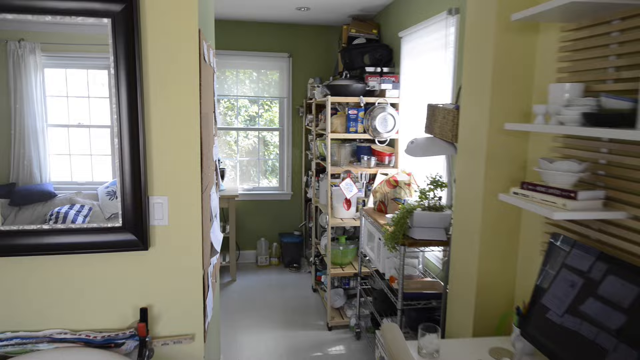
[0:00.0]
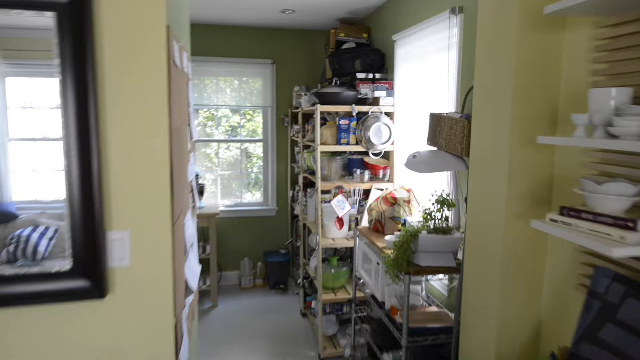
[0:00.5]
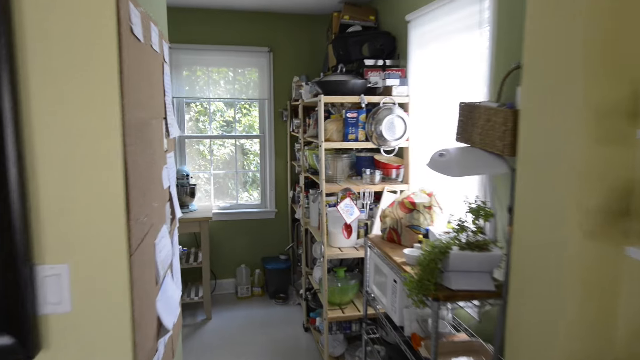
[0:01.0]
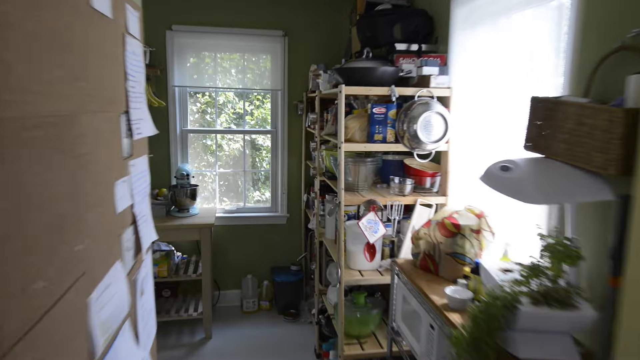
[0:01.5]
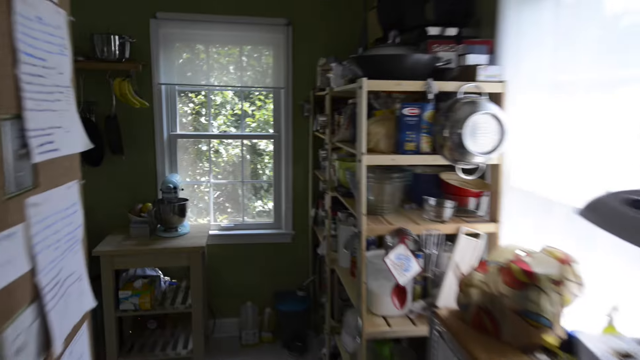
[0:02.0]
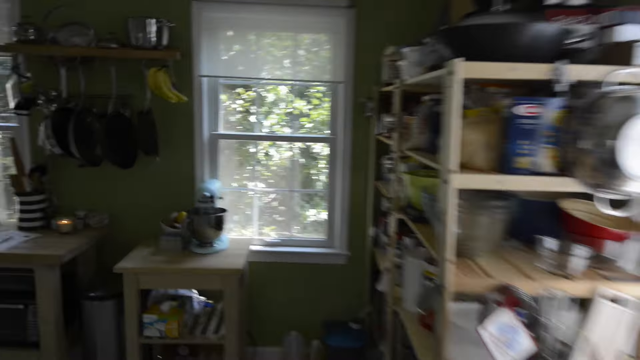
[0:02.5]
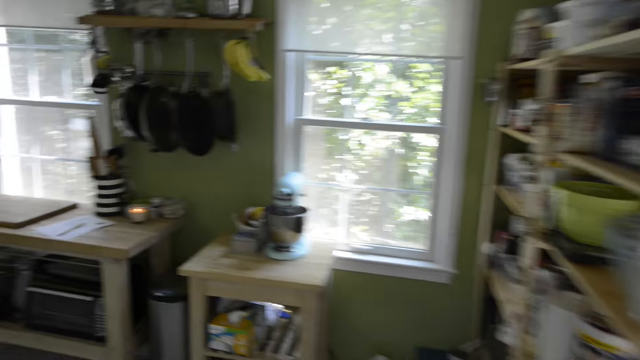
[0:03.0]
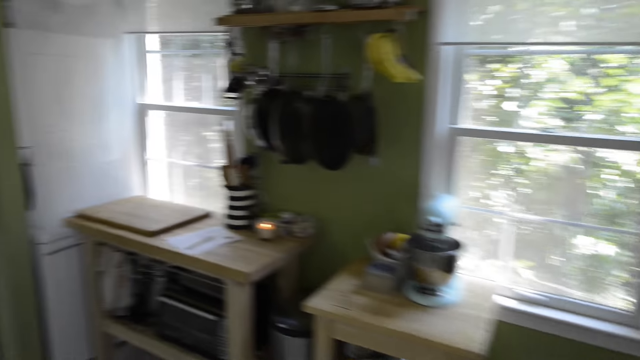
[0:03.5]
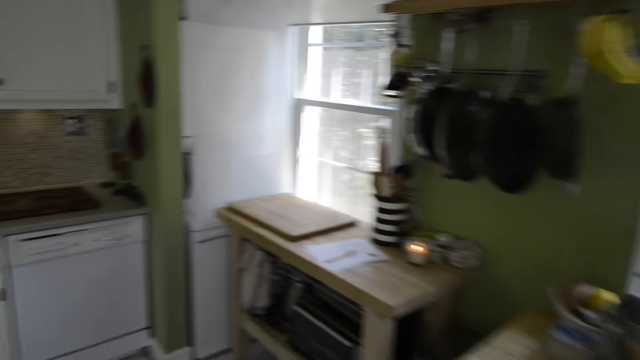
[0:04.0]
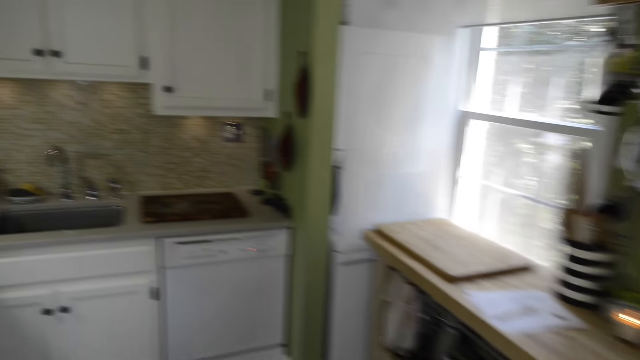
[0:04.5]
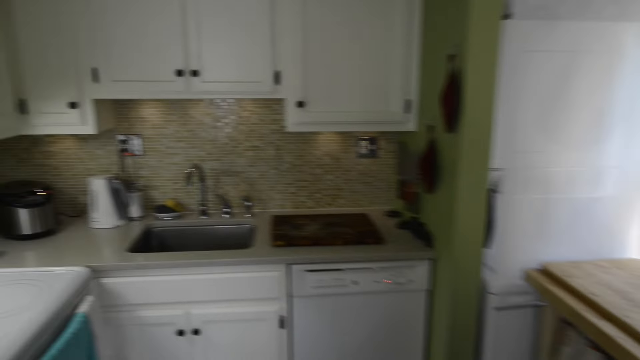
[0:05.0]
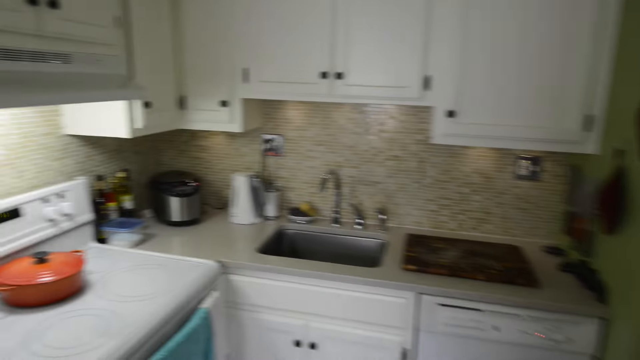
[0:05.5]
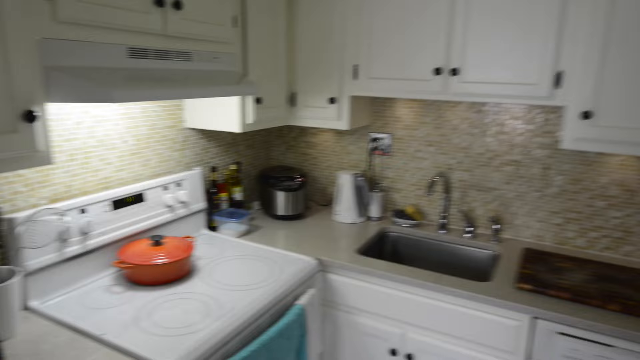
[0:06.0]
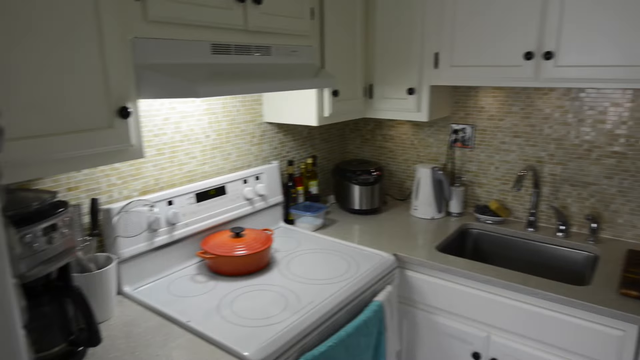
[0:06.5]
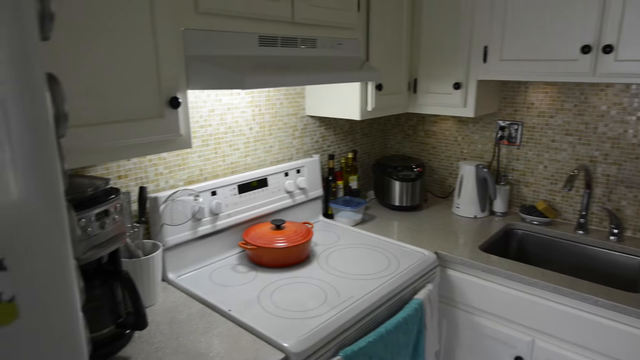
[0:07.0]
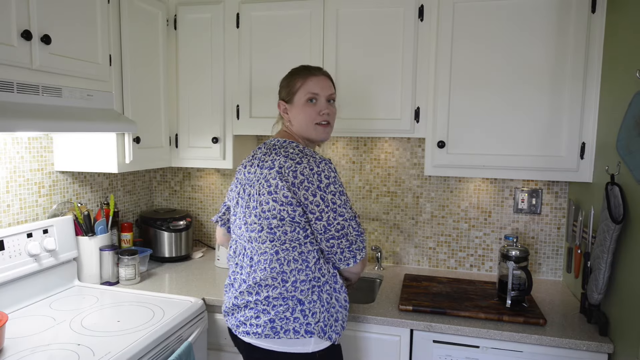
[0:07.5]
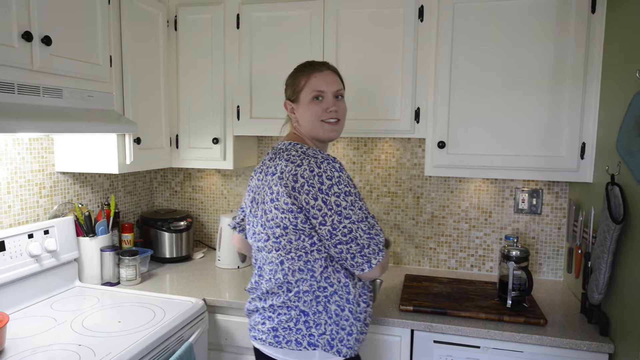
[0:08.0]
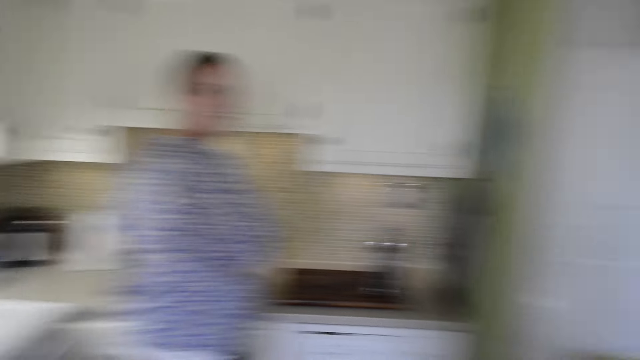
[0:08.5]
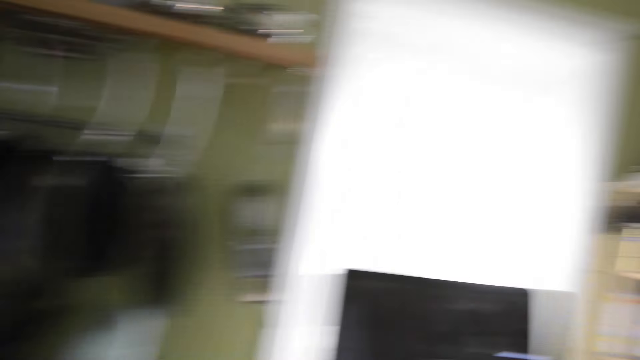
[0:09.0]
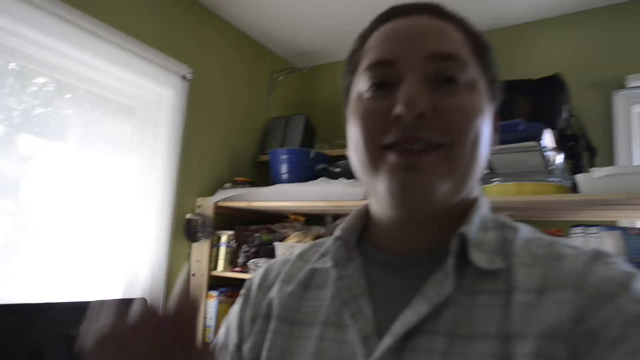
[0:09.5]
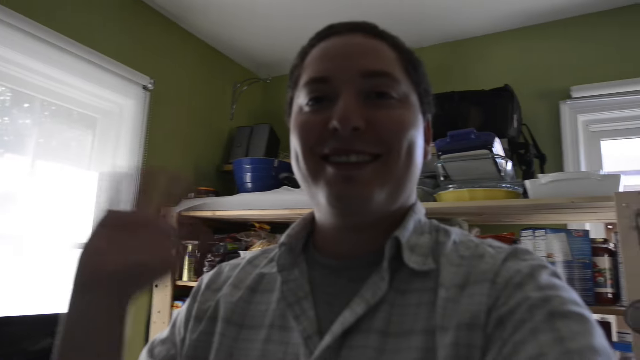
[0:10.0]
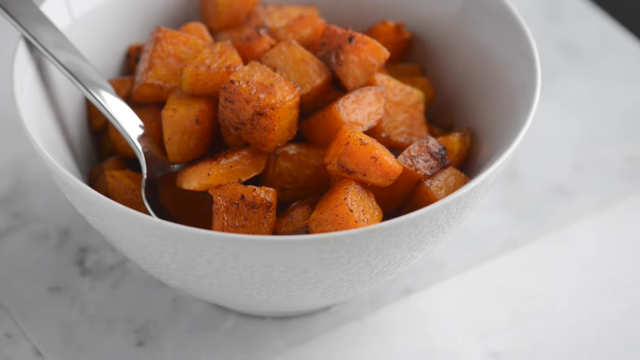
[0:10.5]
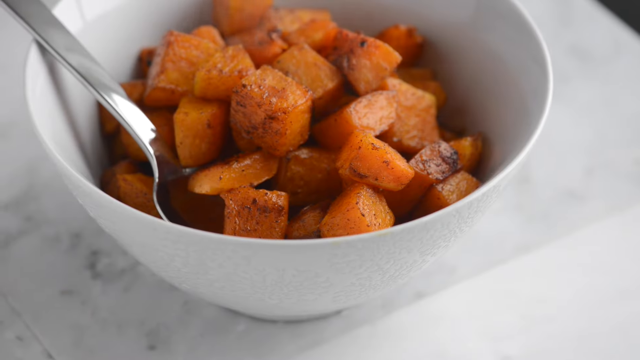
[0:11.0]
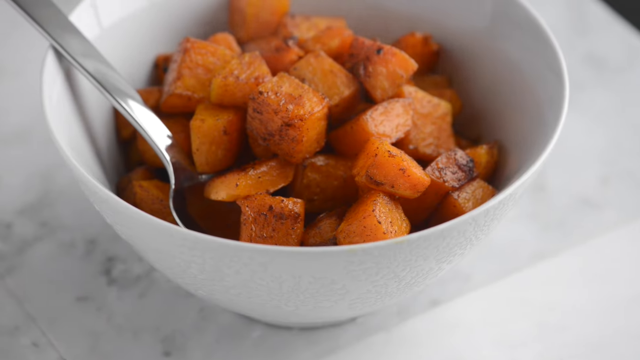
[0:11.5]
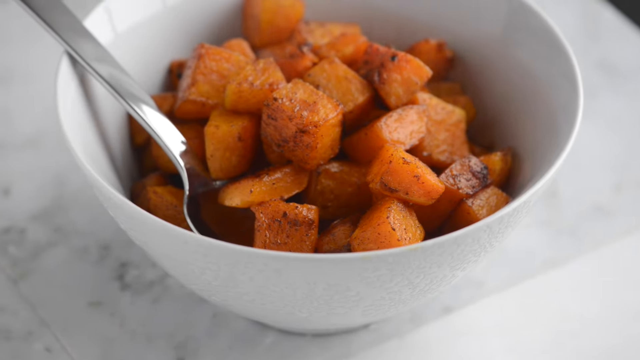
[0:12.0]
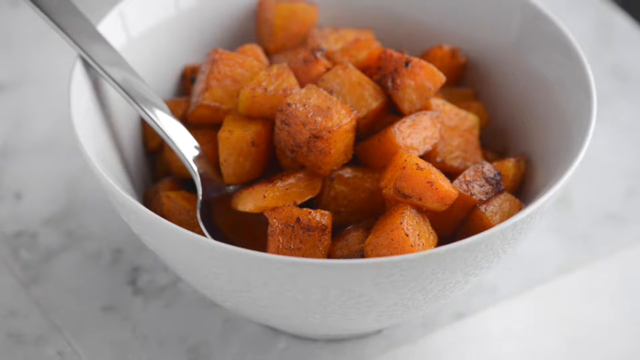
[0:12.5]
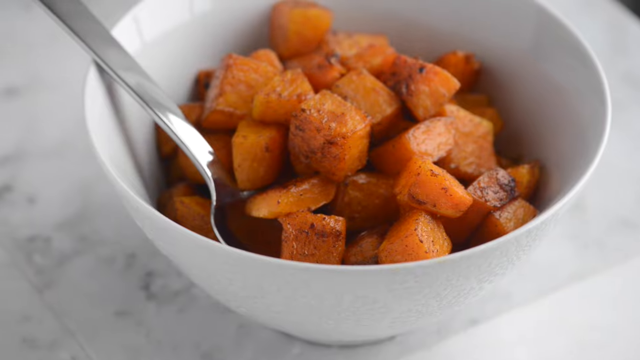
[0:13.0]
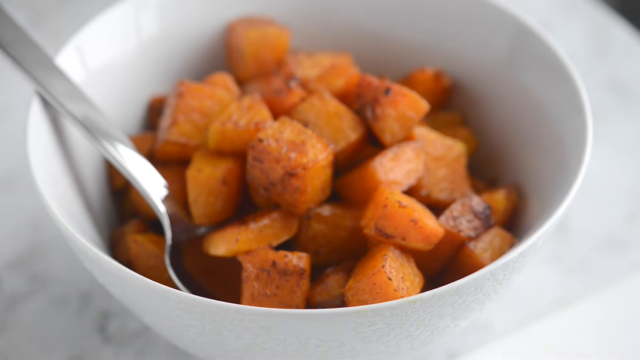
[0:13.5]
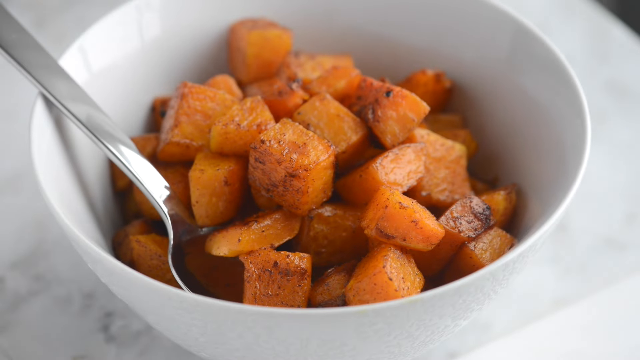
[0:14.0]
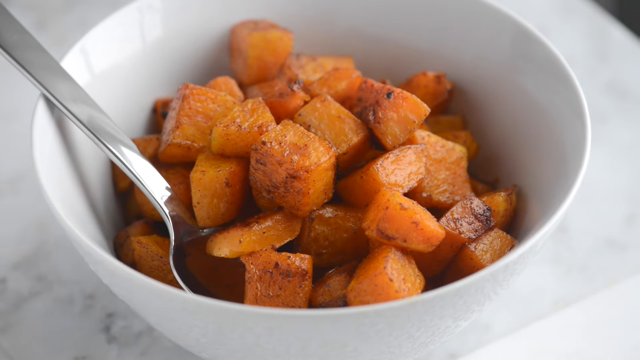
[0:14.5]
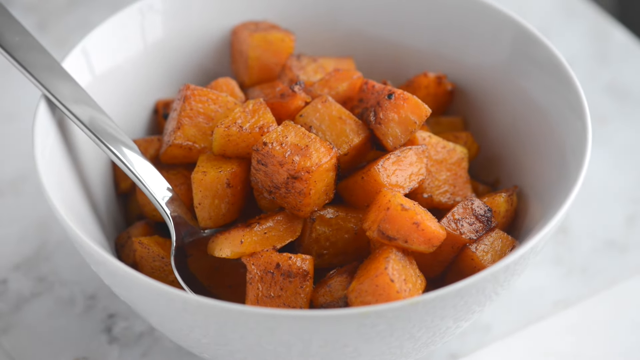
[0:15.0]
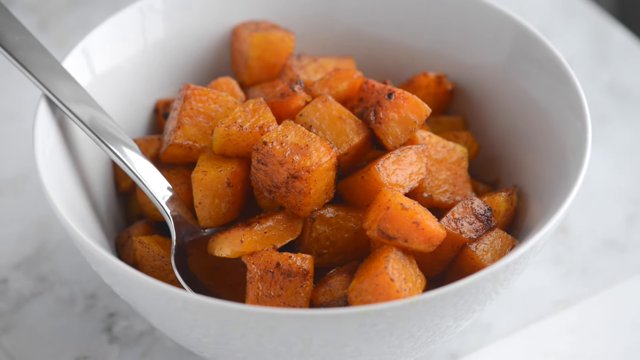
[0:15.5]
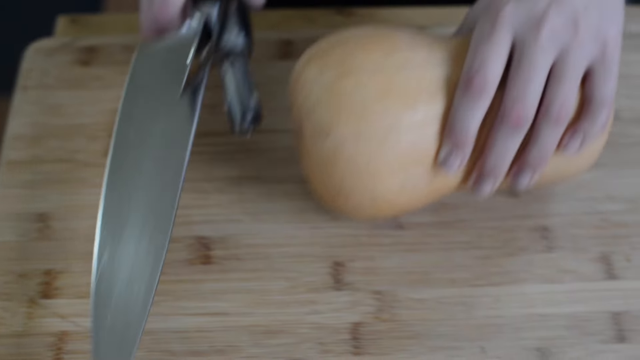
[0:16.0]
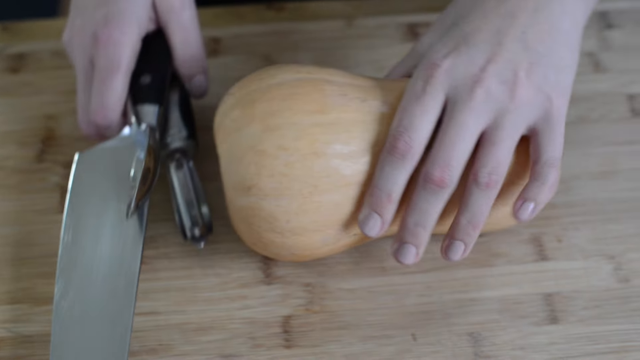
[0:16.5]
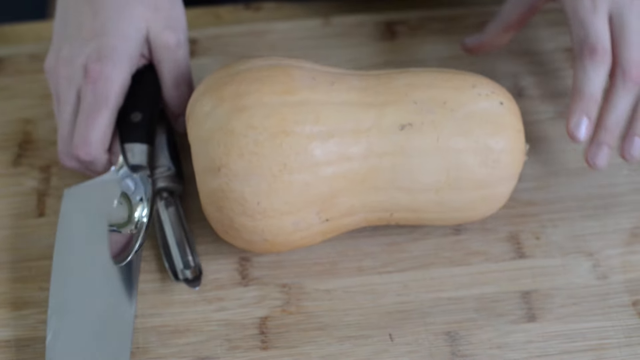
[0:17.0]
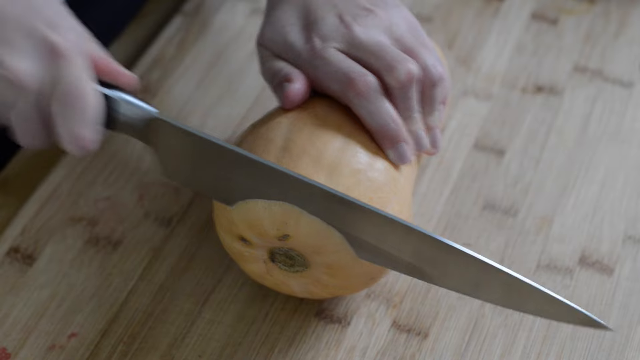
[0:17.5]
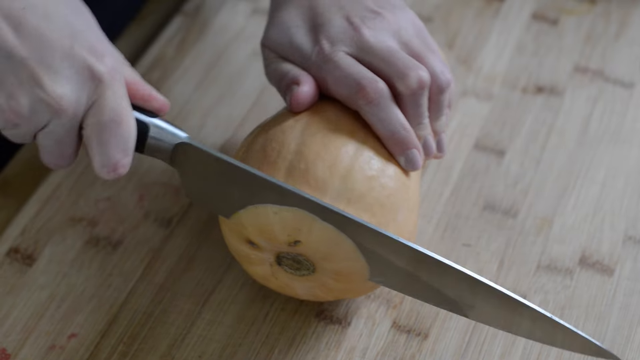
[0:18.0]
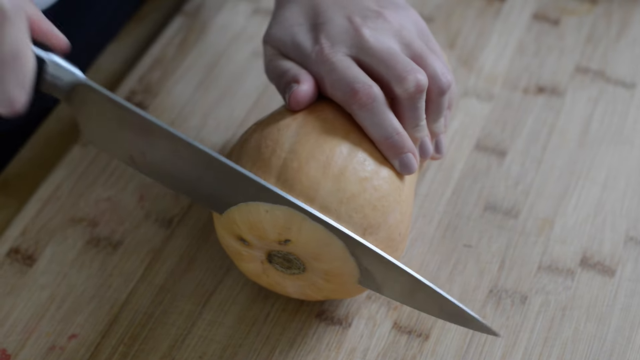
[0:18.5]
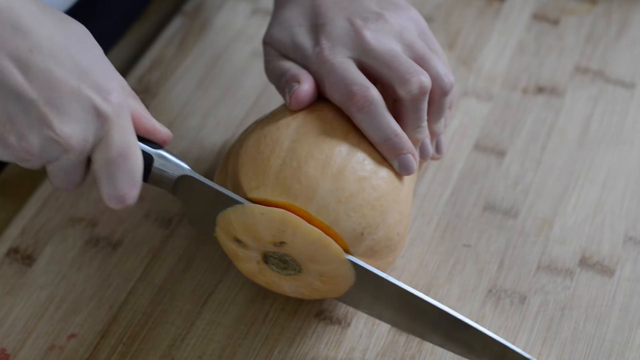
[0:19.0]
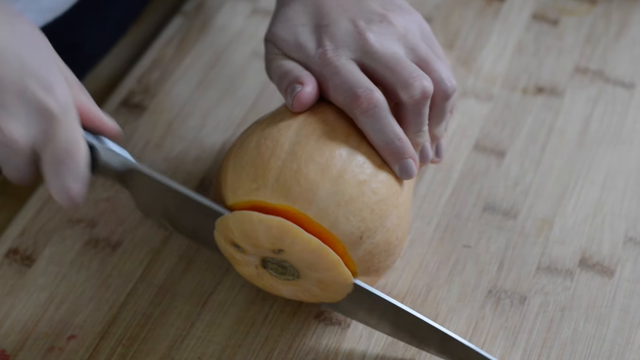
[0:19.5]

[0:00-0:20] The video opens with something like a tour through a kitchen. Shelves hold some messy-looking pots and pans. The camera pans to a man and a woman, then to what is possibly some squash being cut. The kitchen walls look painted green, the stove is white, and the woman wears a white and blue shirt; behind her is a tiled, paneled, patterned backsplash. The camera then pans to a person waving at the camera, and then to a white bowl filled with chopped-up food that looks like squash, with a silver spoon in the bowl. The squash is cut with a big knife on a white, wood-toned cutting board. The dishwasher and fridge also look white. The video is fast-paced with a number of jump cuts, has a home-video quality, and is fairly low resolution, though what is happening can still be made out.